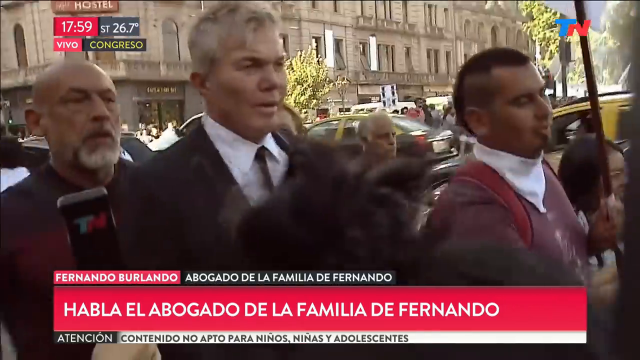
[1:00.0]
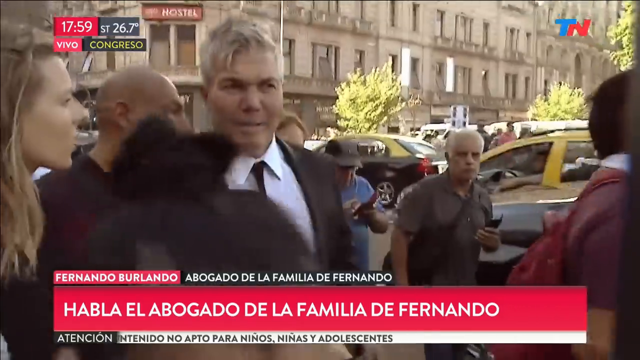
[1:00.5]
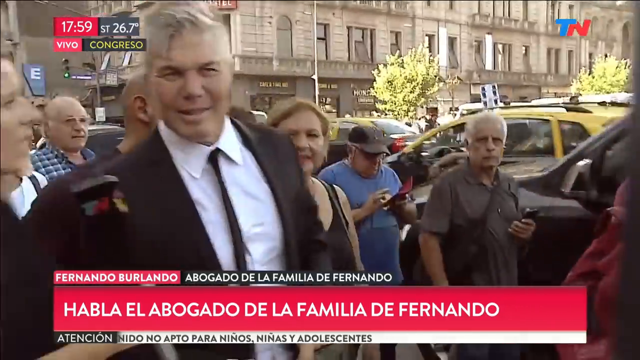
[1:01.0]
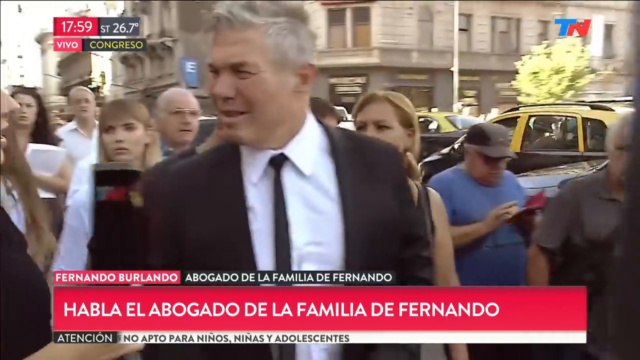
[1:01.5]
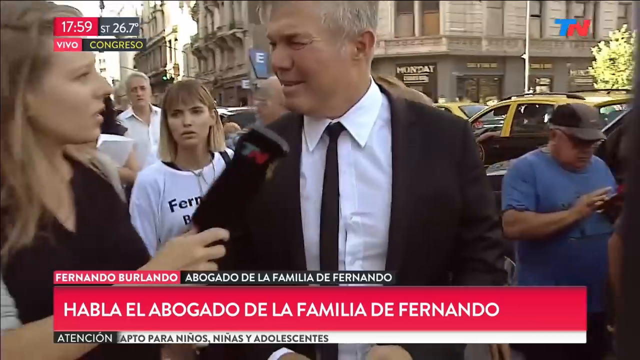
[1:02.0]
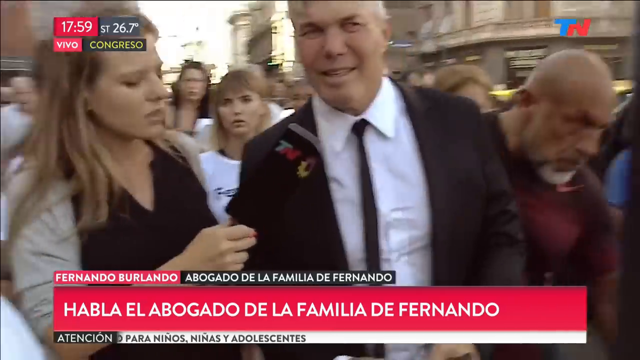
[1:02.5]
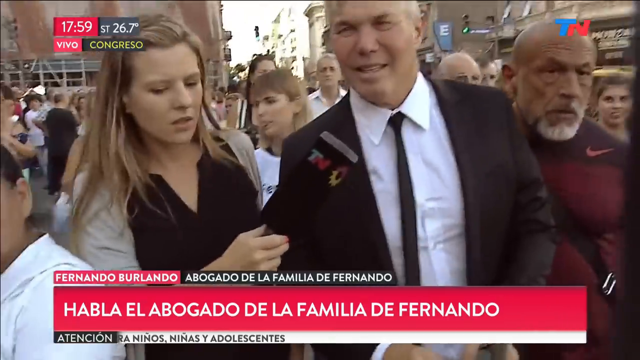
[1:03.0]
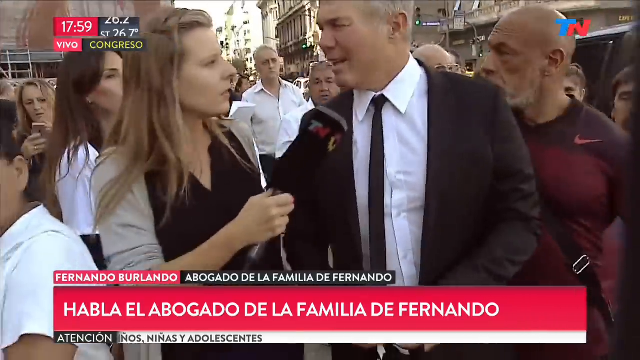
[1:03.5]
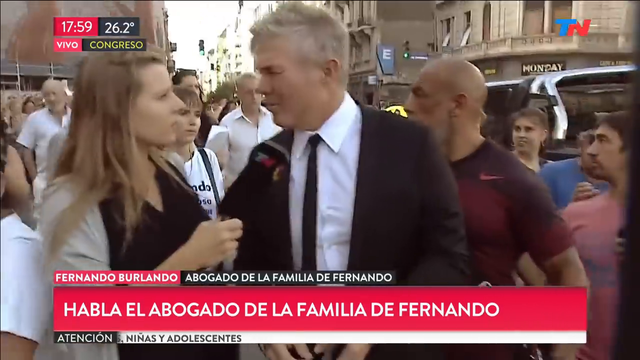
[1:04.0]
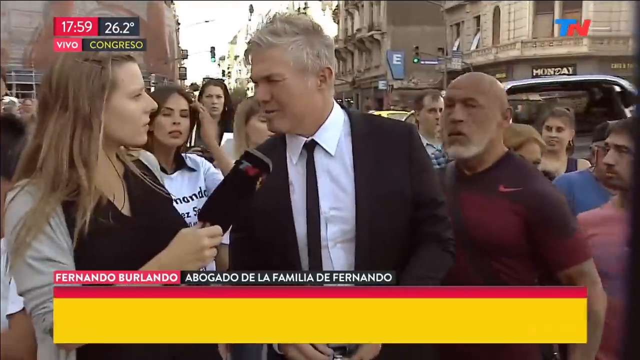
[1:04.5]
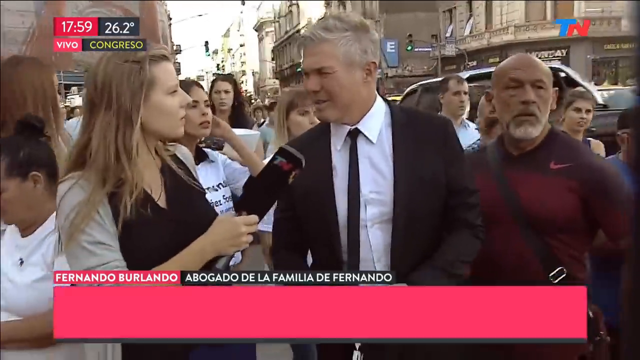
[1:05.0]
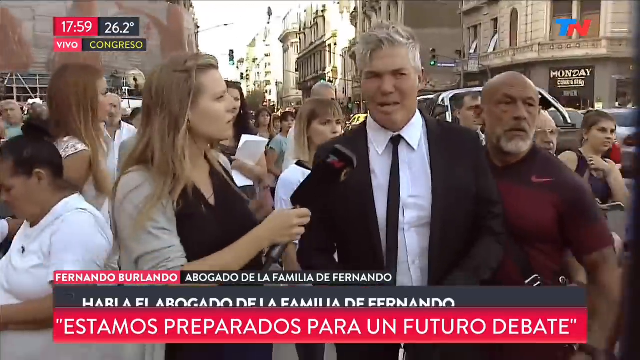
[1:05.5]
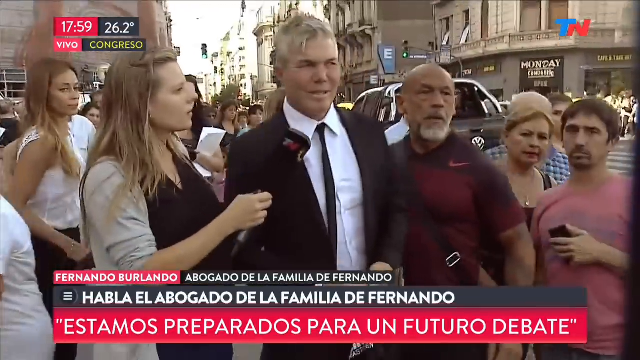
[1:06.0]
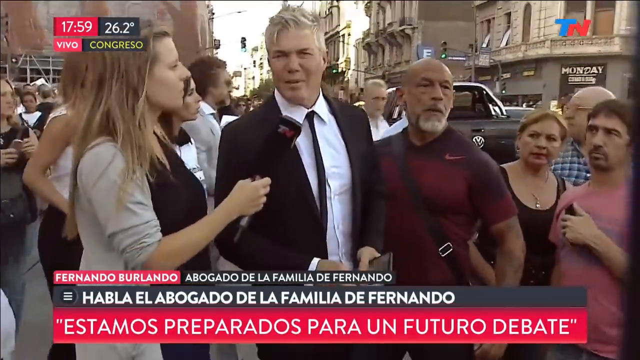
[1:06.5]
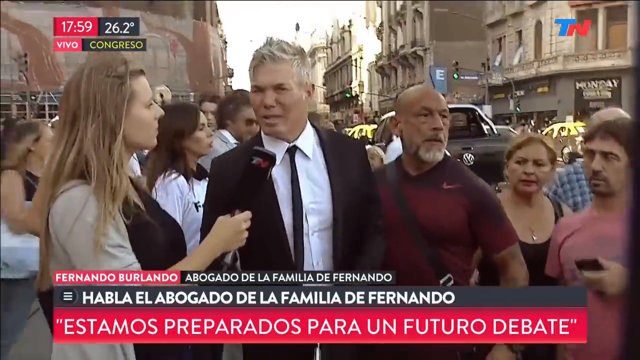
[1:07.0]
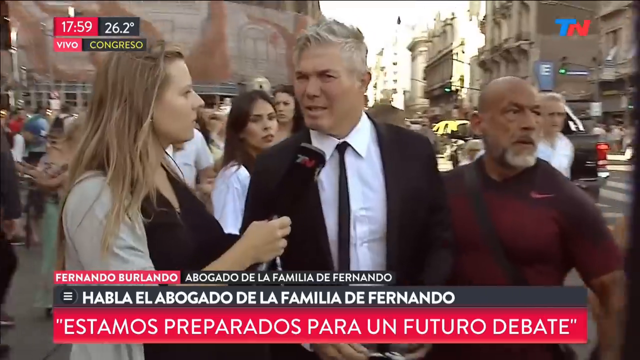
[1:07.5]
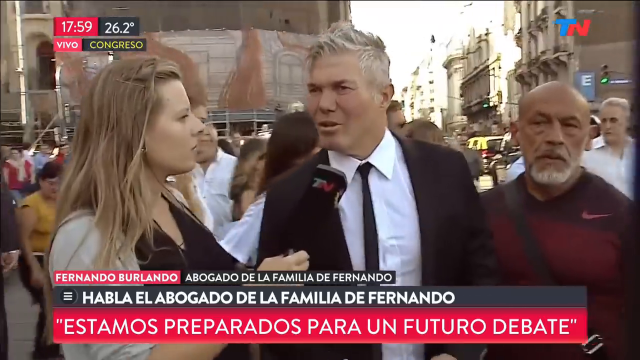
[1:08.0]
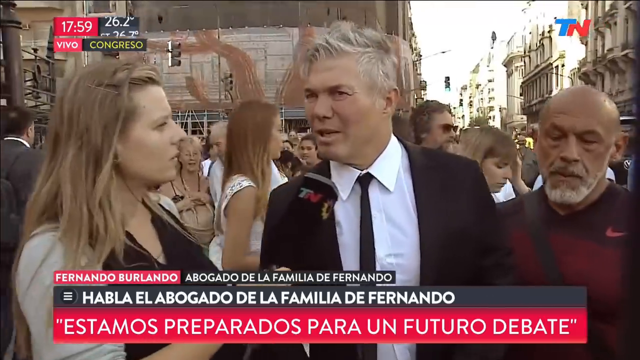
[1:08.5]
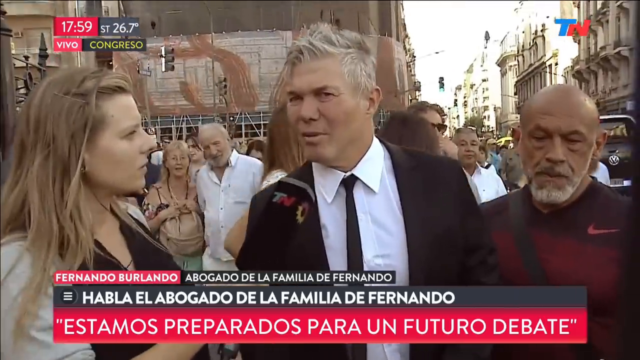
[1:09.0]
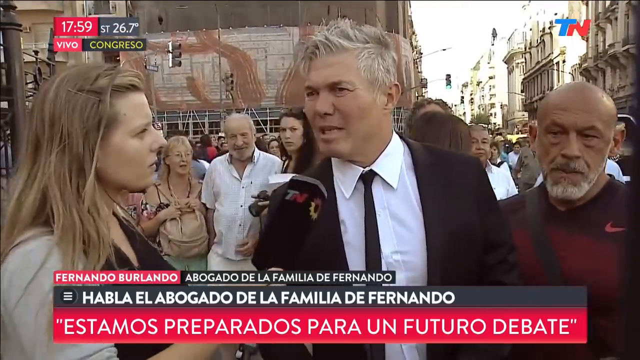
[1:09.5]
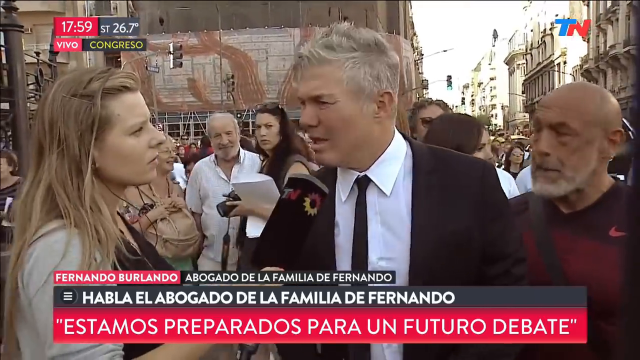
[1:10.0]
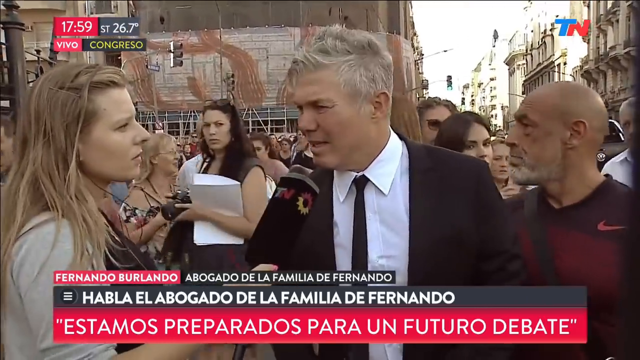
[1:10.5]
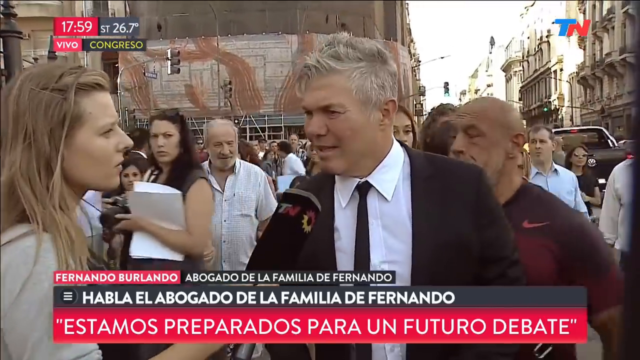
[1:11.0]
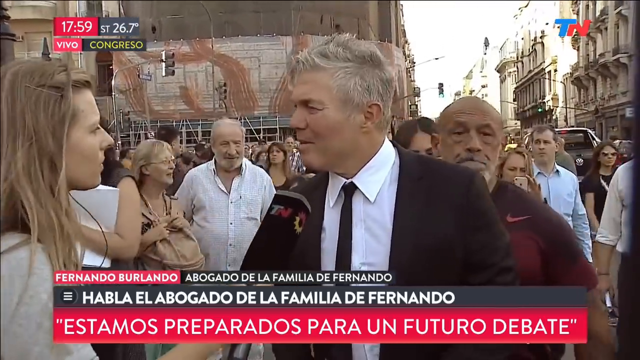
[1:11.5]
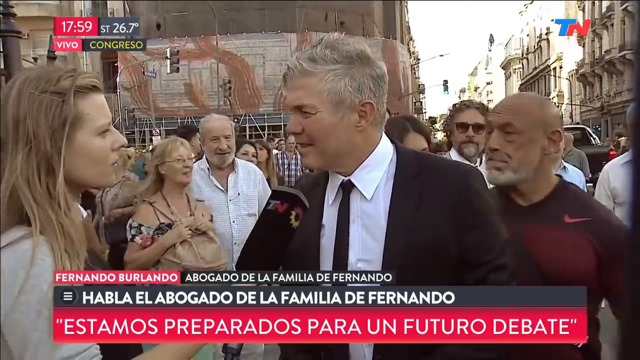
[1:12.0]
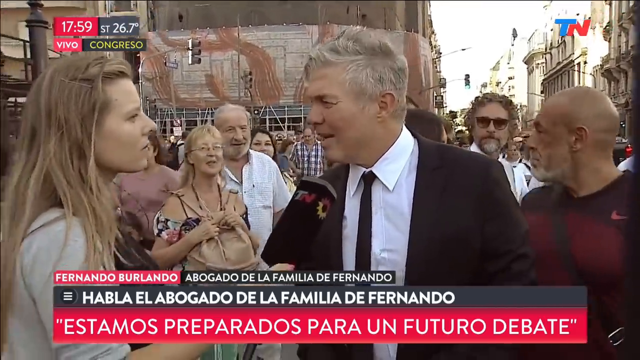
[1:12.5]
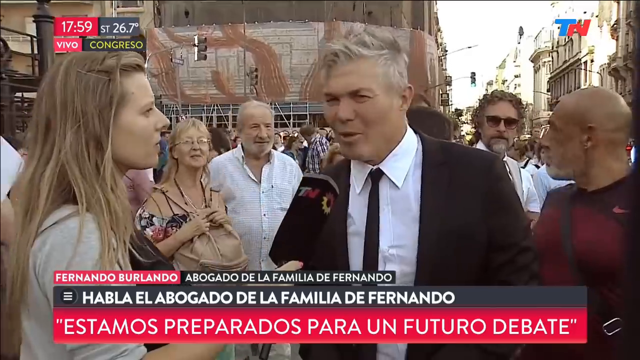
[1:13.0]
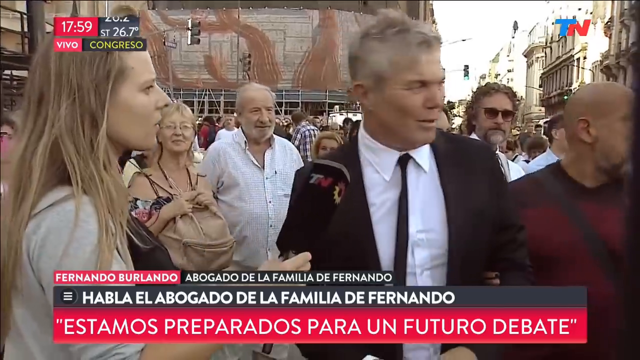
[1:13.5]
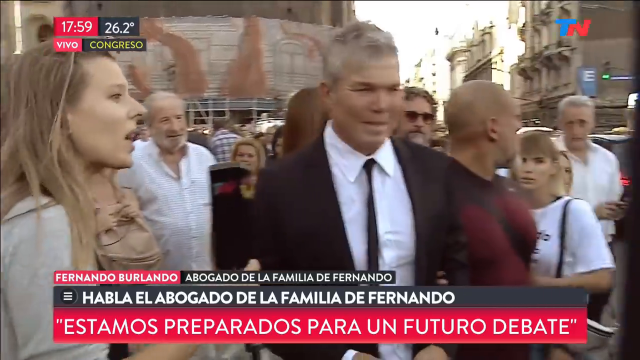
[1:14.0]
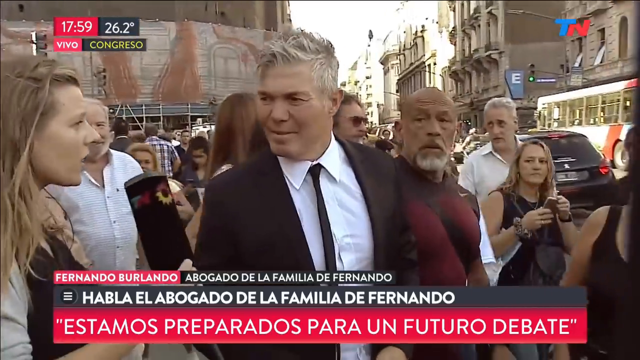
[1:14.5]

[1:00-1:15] A man with short gray hair, in a black suit, a white shirt, and a black tie, speaks into a microphone to a newscaster, a woman with long light brown hair. Both face the camera as they walk toward it, with a large, dense crowd behind them. The man shakes his head as he looks around at the crowd in front of him while speaking. Large towering buildings and more of the crowd are visible in the background. Text at the bottom reads "HABLA EL ABOGADO DE LA FAMILIA DE FERNANDO" and then changes to "Estamos preparados para un futuro debate", in white on a red background. A blue and red TN logo appears in both the lower right and upper right corners.